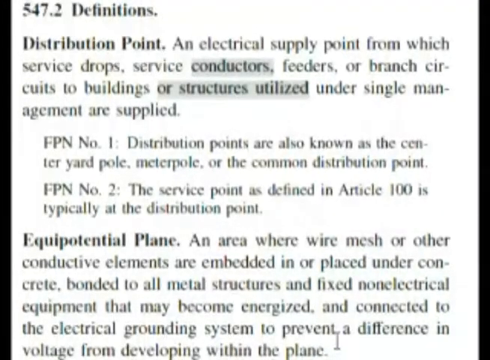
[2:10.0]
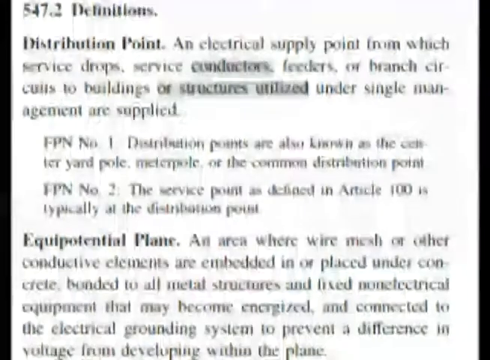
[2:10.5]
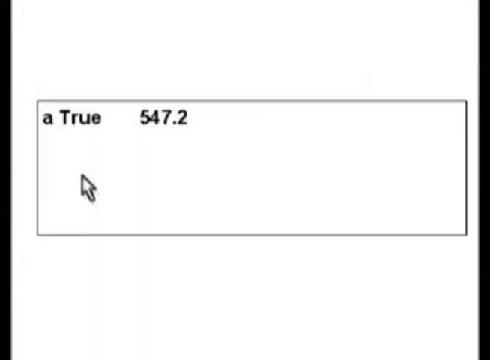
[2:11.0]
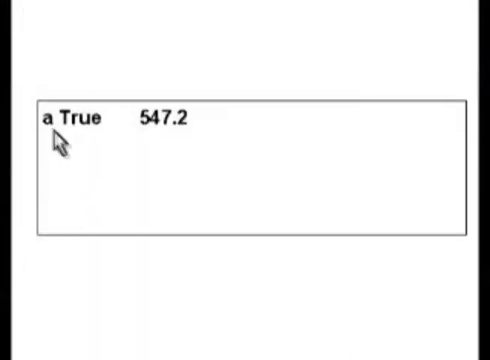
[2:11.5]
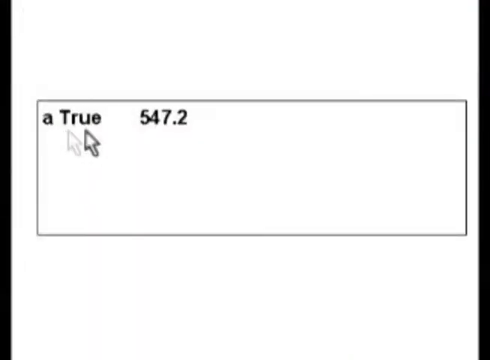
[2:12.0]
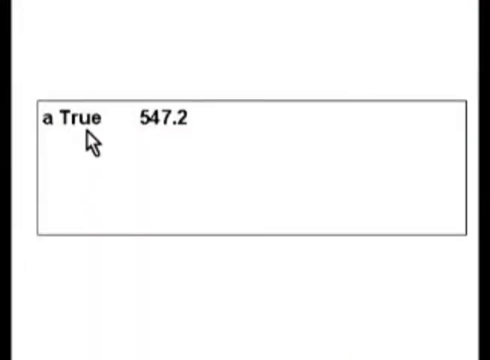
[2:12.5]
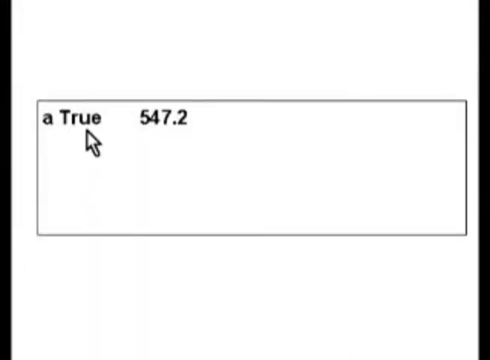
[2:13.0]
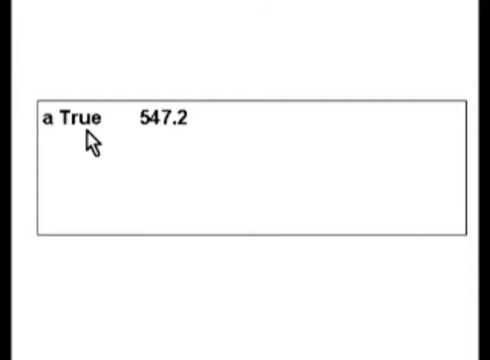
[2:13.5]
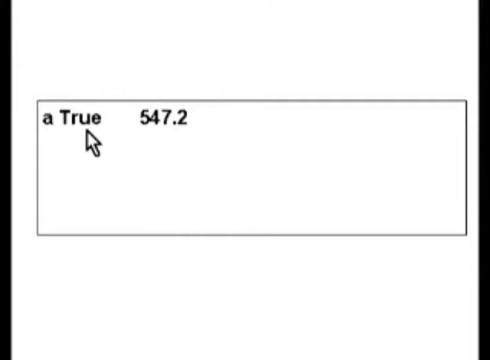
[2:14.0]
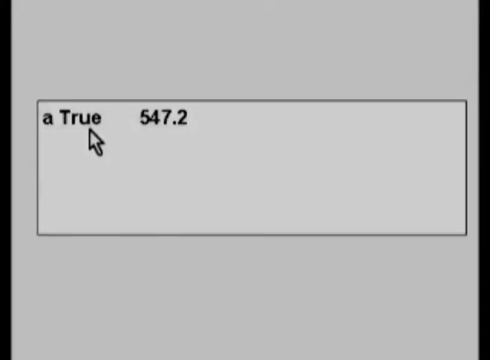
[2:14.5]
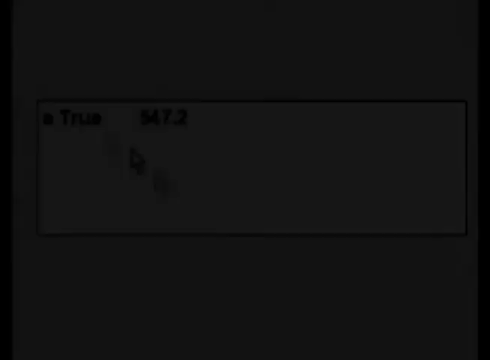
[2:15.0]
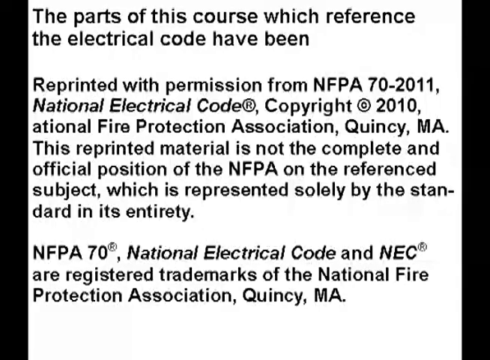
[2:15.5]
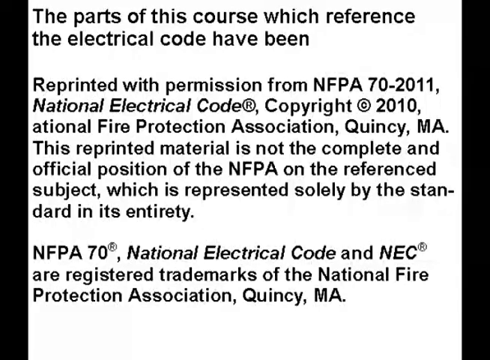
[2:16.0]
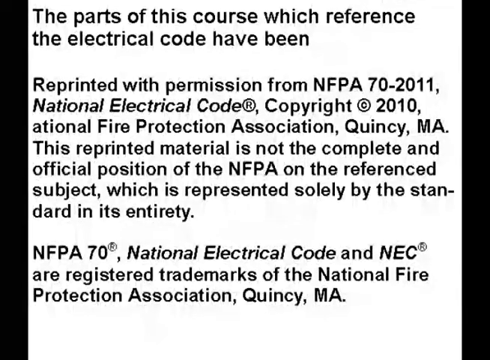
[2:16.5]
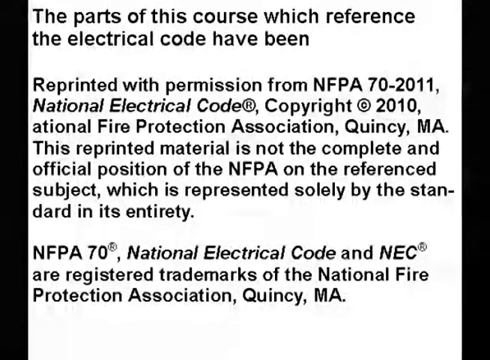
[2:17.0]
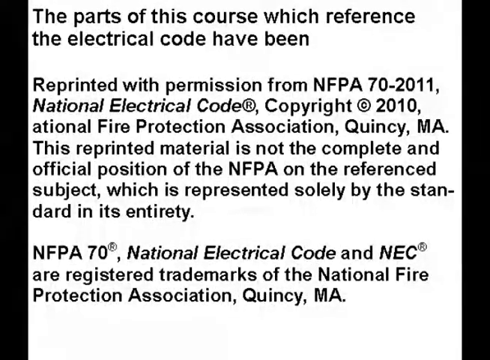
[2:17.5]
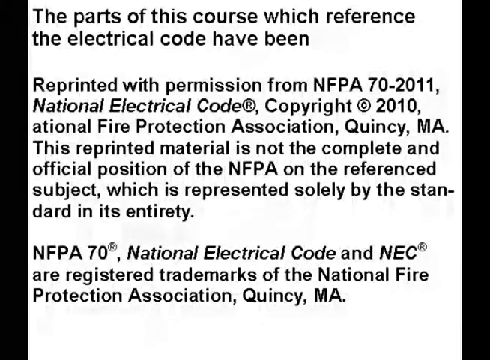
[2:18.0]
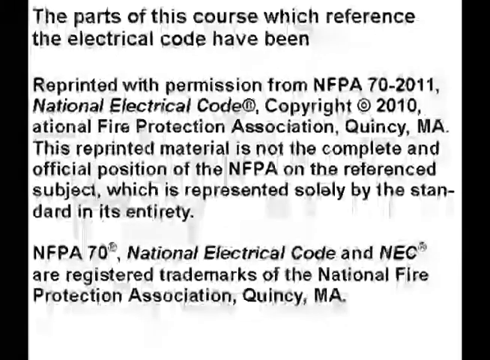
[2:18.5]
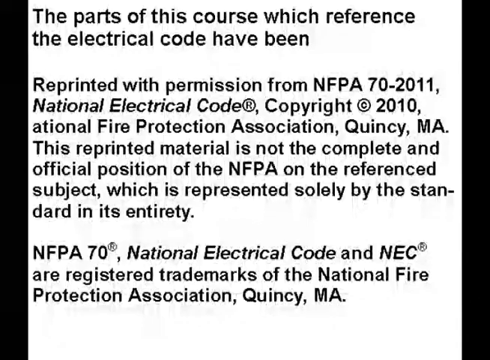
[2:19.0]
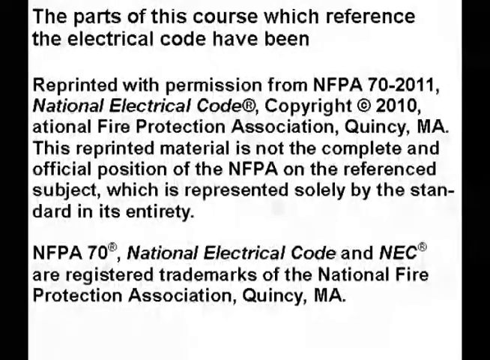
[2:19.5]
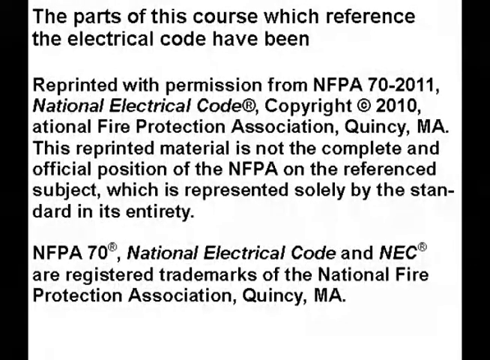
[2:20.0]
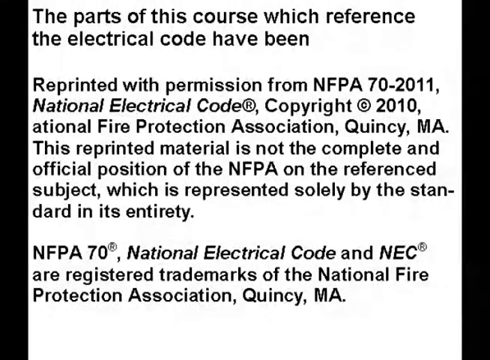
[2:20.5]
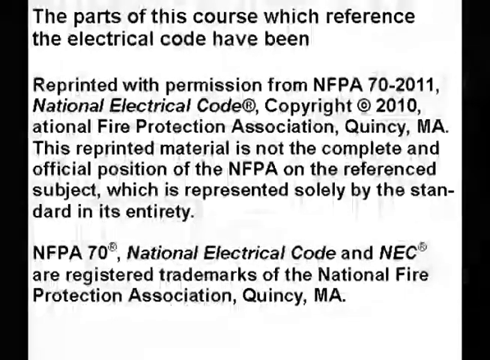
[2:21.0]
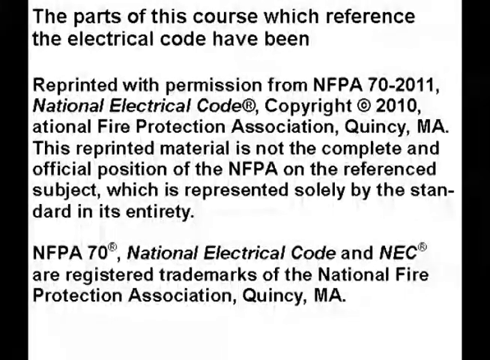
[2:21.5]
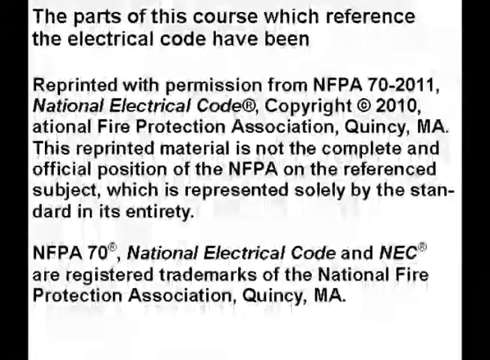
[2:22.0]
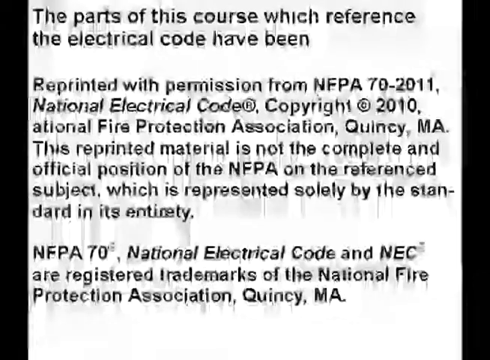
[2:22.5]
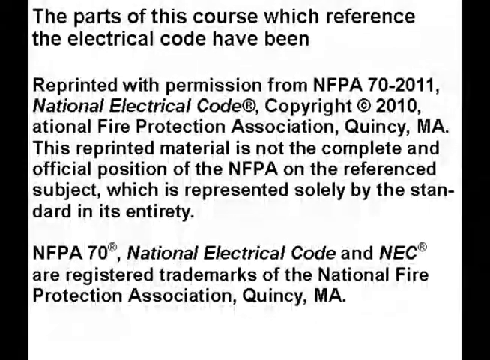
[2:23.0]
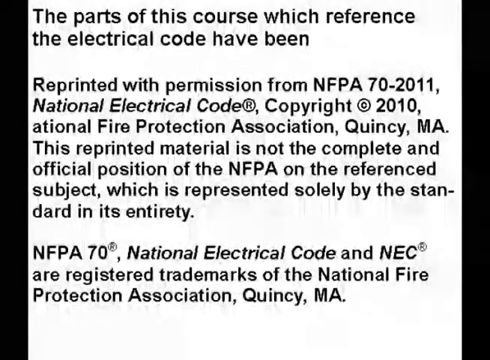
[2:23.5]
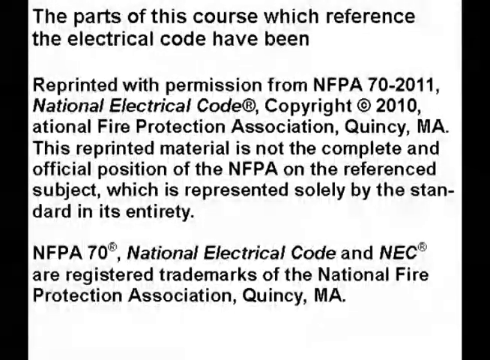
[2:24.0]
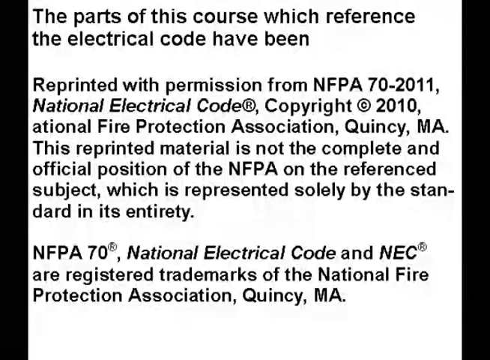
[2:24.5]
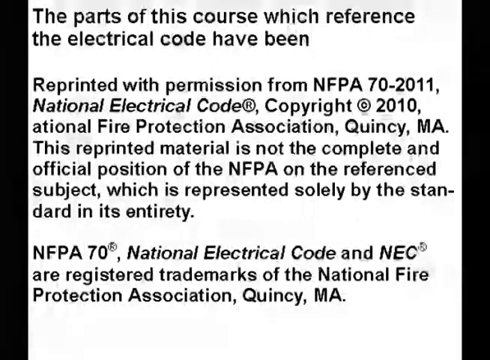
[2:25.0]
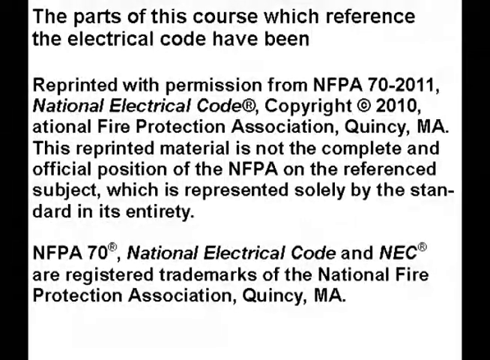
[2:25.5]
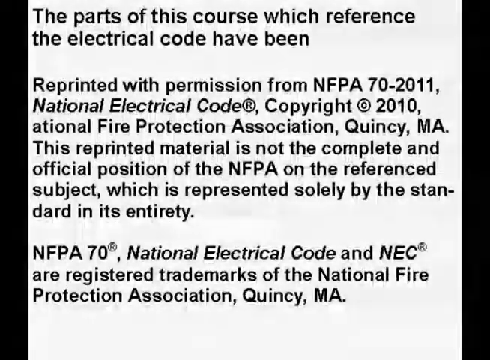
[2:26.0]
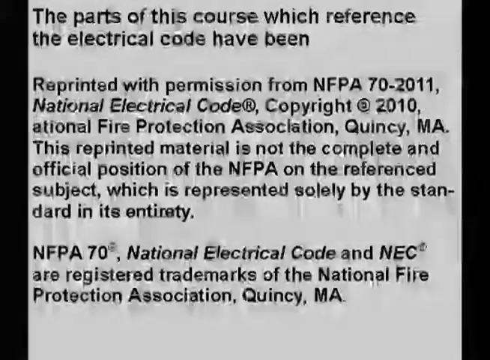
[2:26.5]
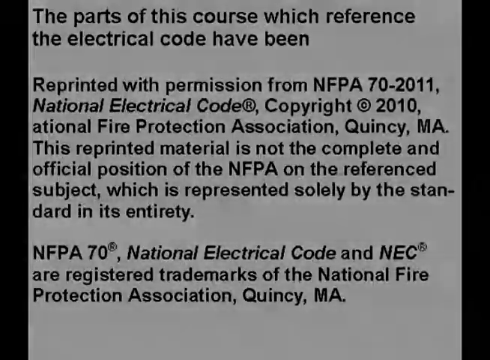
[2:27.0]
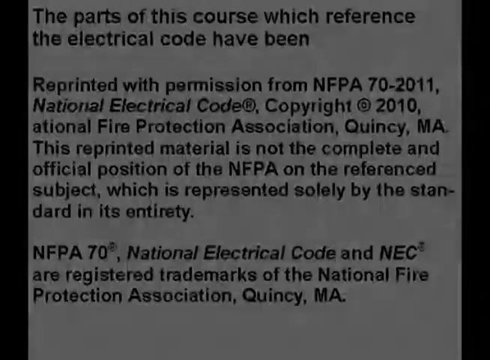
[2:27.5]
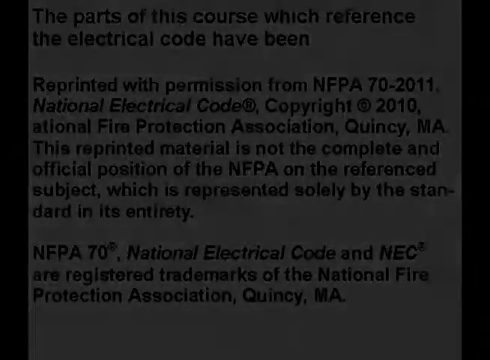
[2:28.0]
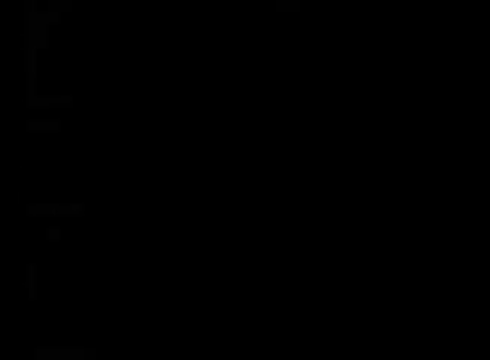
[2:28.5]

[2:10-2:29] The same page of definitions is still shown. The view then jumps to what seems to be a screen for answering the original question, reading "a true 547.2." It goes to a black screen and then back to the original warning screen: "the parts of this course which reference the electrical code have been reprinted with permission from NFPA 70-2011 National Electrical Code Copyright 2010 National Fire Protection Association Quincy, Massachusetts. This reprinted material is not the complete and official position of the NFPA on the referenced subject which is represented solely by the standard in its entirety. NFPA 70 National Electrical Code and NEC are registered trademarks of the National Fire Protection Association Quincy, Massachusetts." The warning screen stays for the remaining time, and then it changes to a black screen.